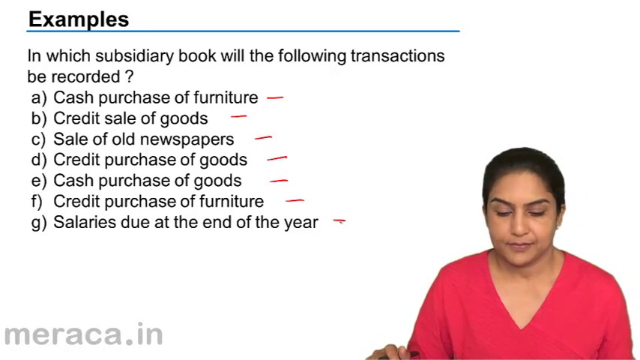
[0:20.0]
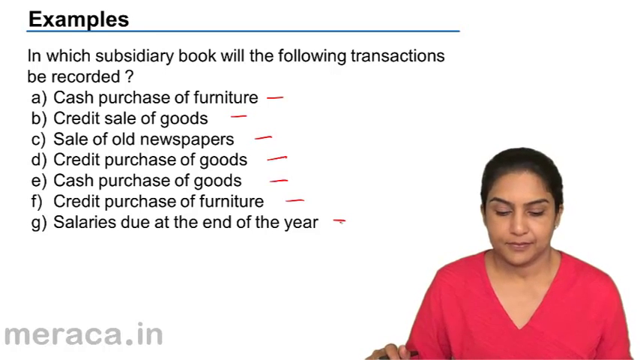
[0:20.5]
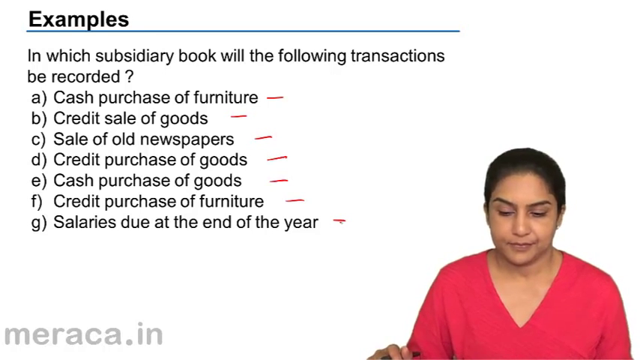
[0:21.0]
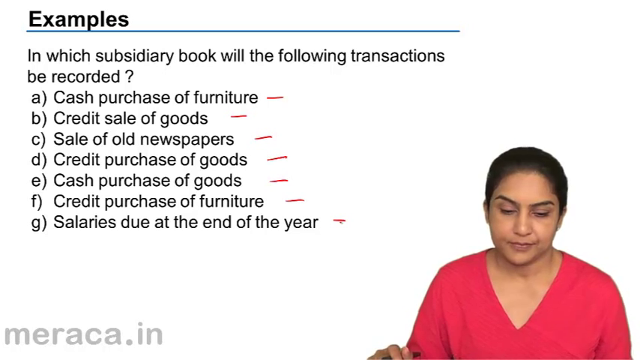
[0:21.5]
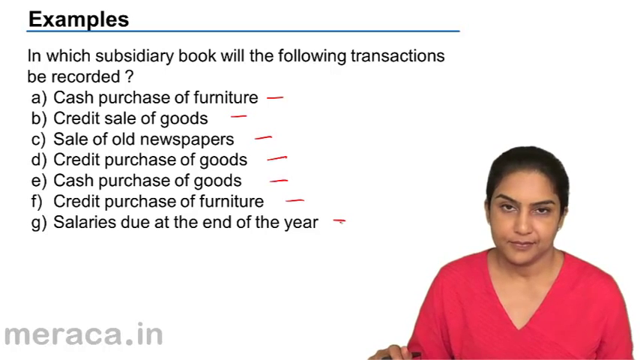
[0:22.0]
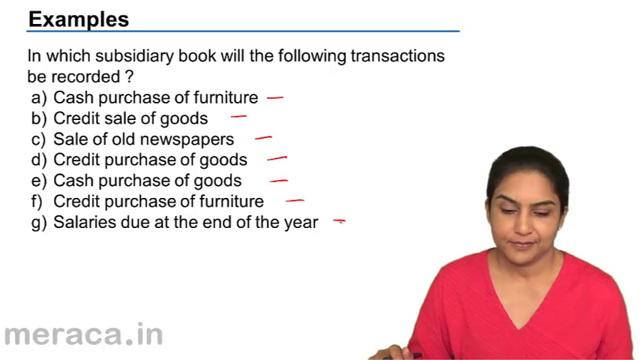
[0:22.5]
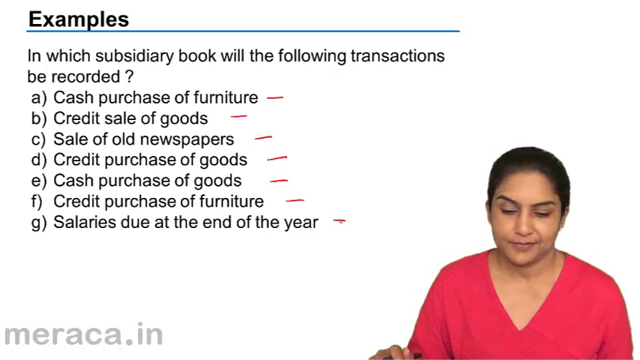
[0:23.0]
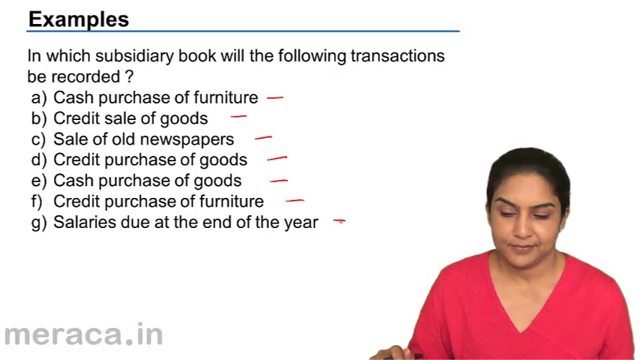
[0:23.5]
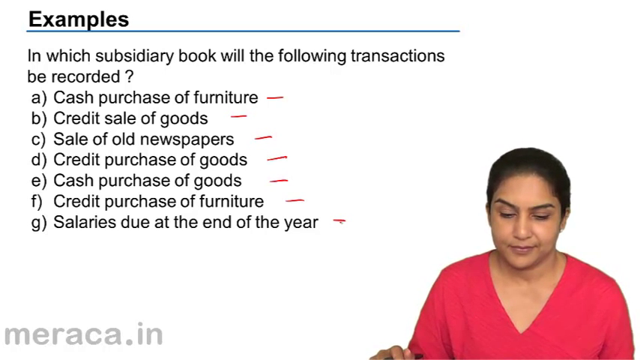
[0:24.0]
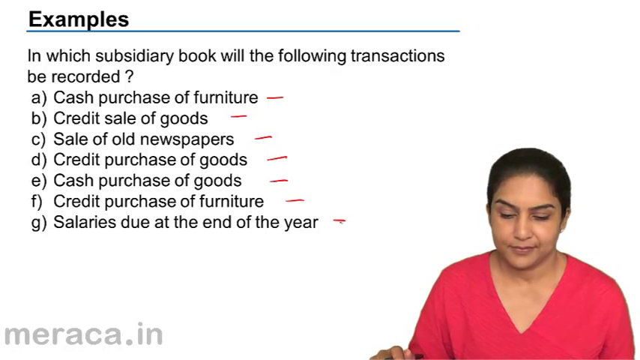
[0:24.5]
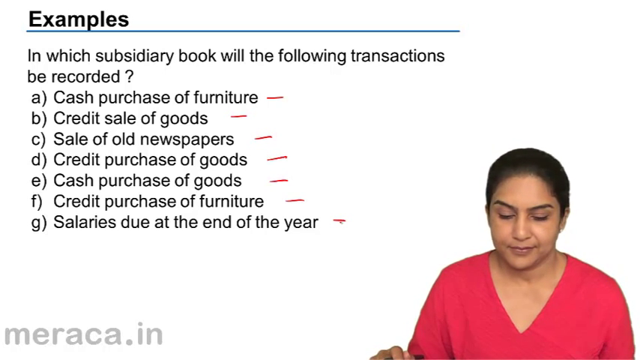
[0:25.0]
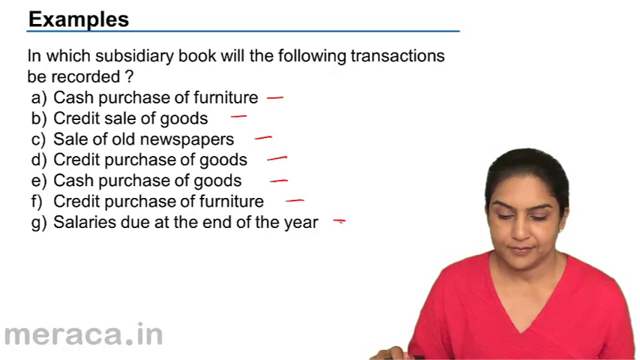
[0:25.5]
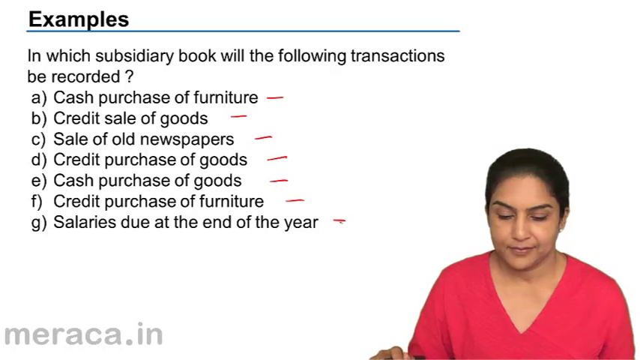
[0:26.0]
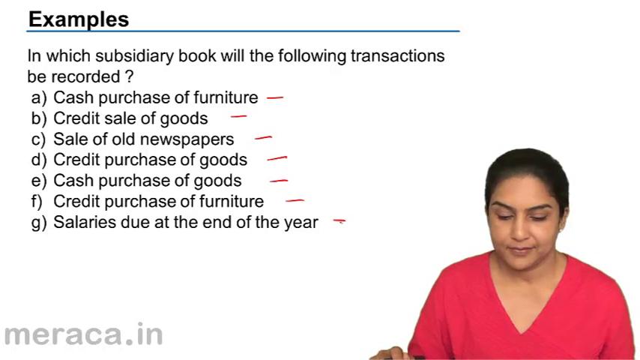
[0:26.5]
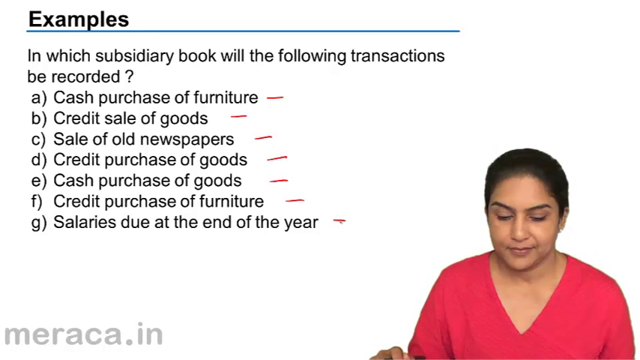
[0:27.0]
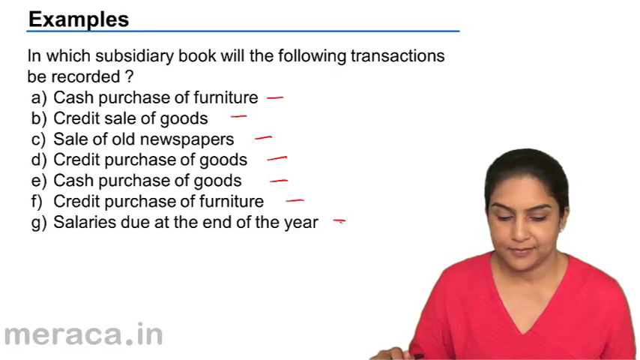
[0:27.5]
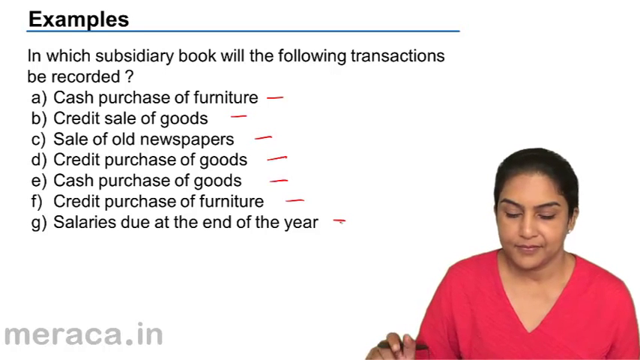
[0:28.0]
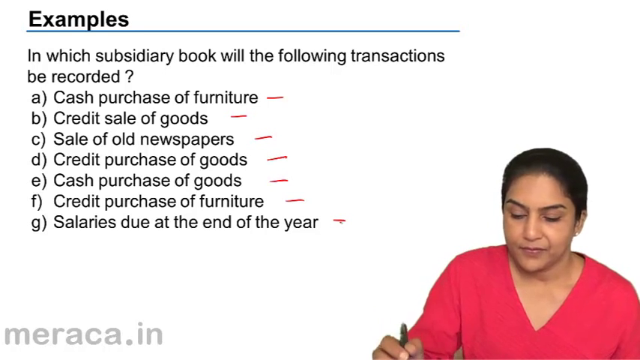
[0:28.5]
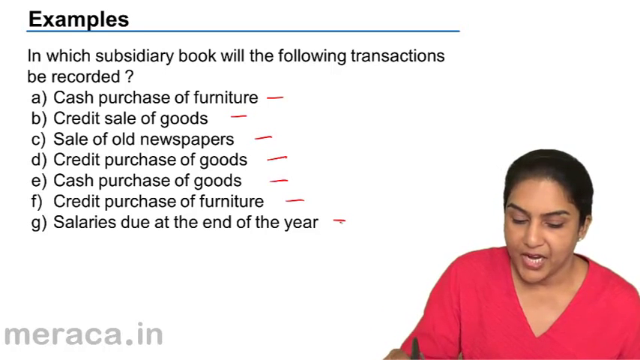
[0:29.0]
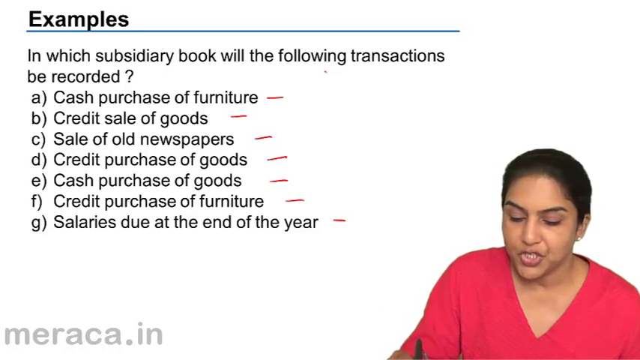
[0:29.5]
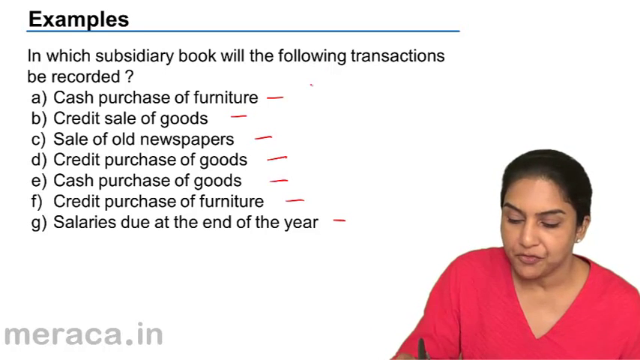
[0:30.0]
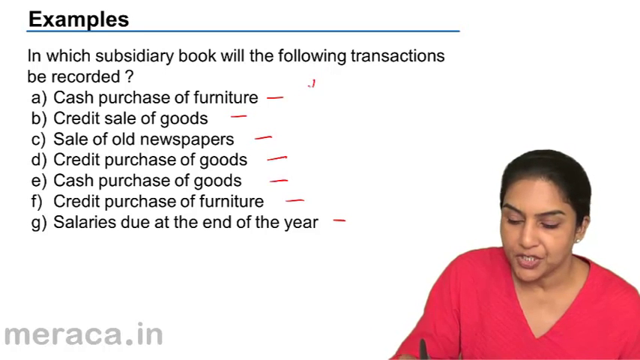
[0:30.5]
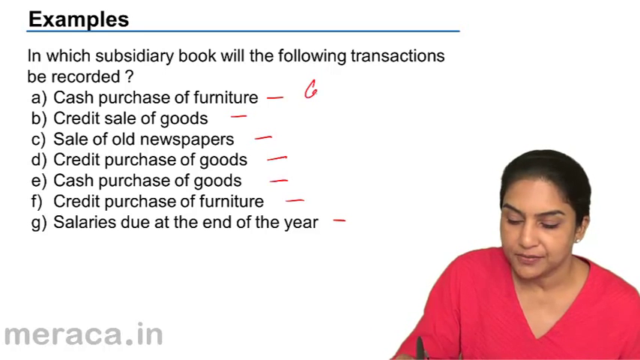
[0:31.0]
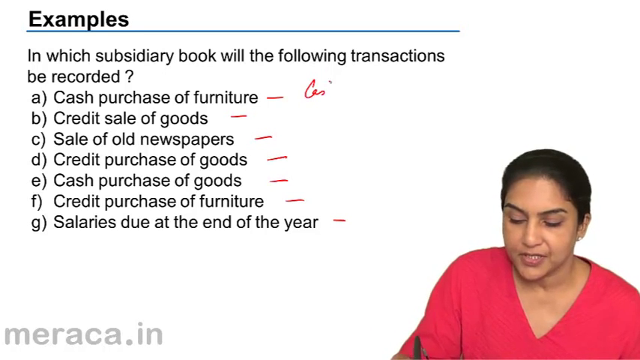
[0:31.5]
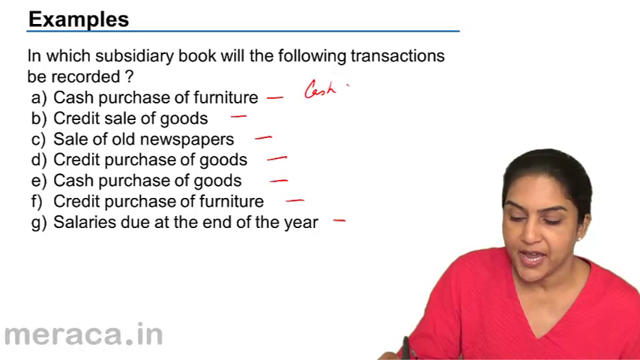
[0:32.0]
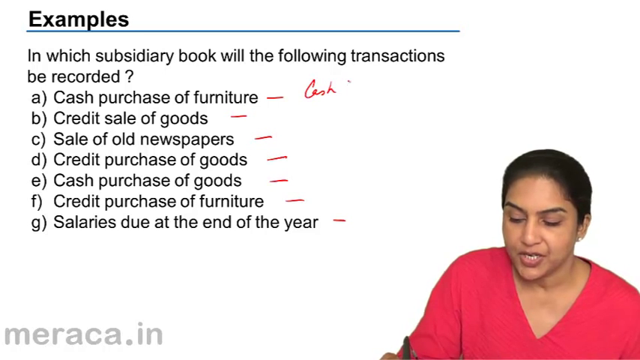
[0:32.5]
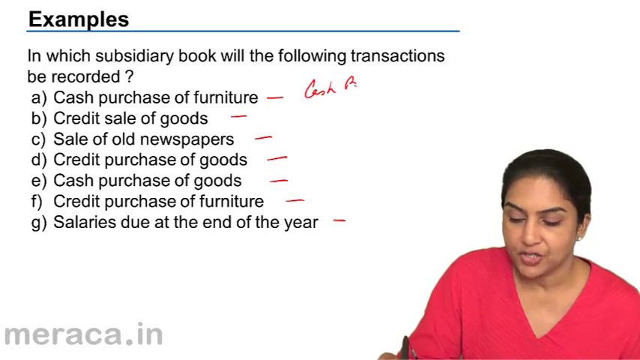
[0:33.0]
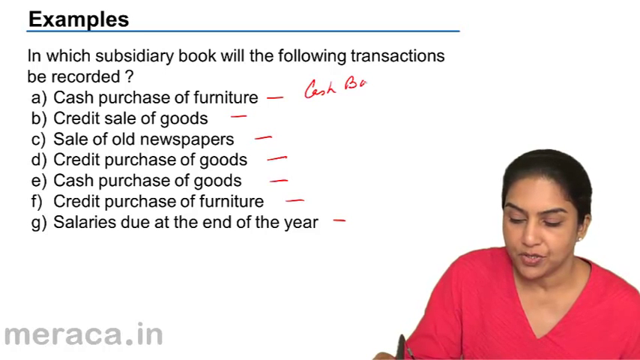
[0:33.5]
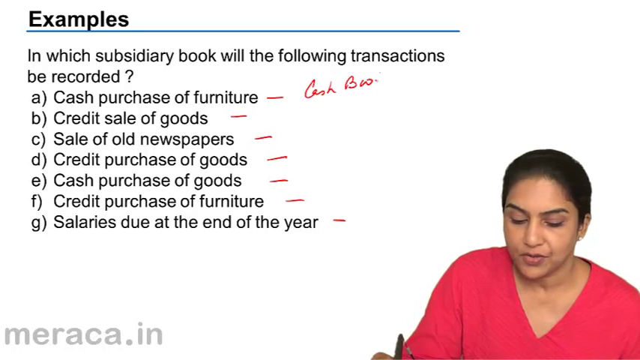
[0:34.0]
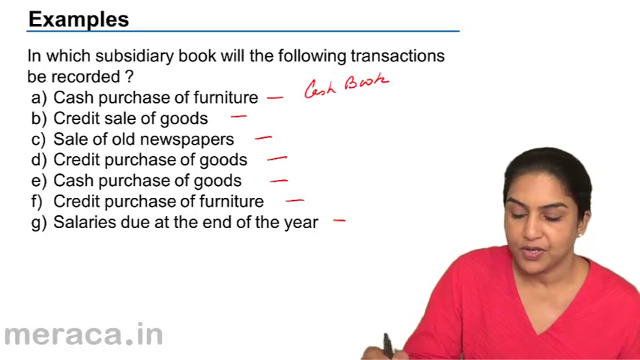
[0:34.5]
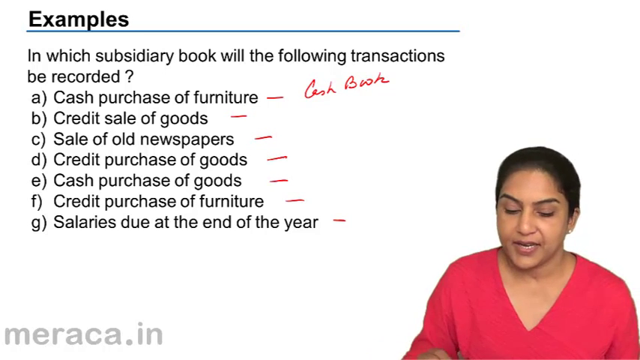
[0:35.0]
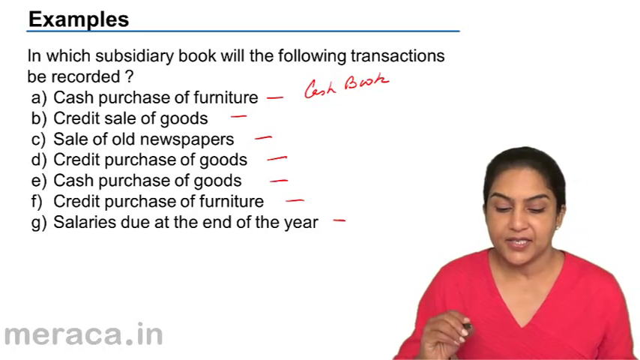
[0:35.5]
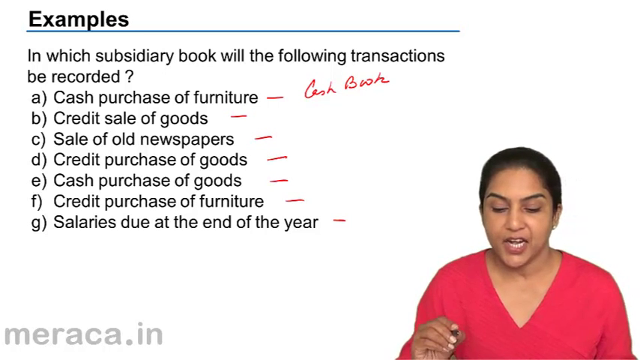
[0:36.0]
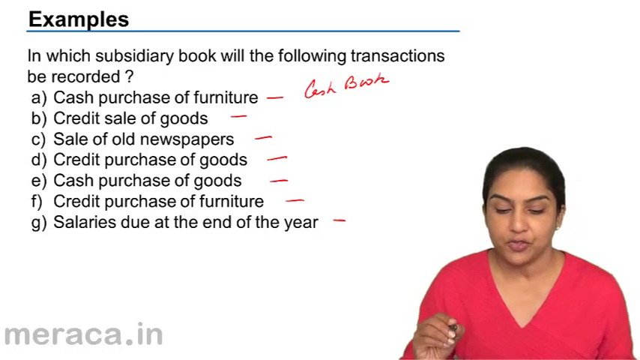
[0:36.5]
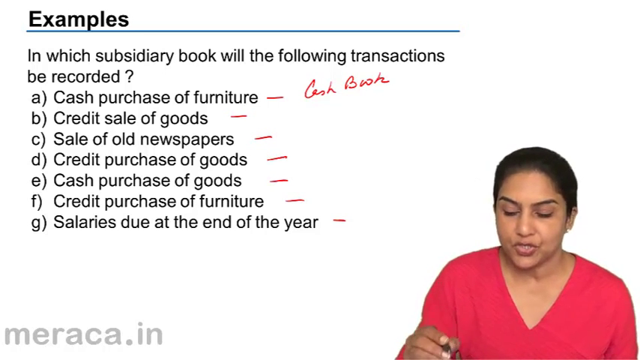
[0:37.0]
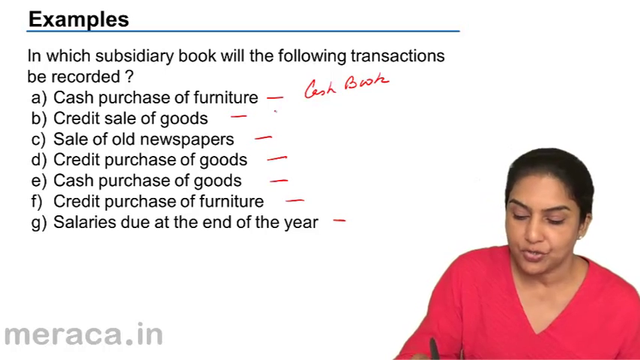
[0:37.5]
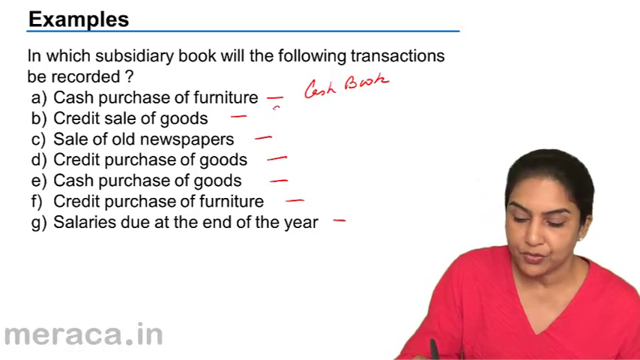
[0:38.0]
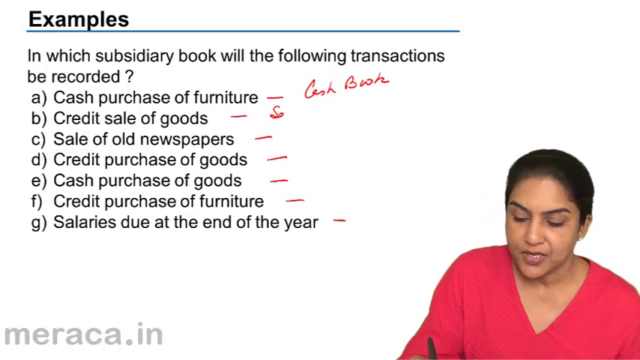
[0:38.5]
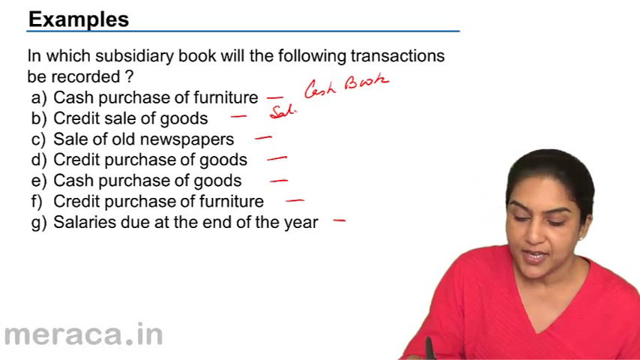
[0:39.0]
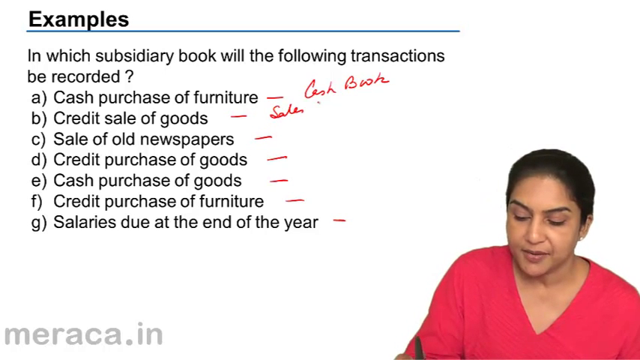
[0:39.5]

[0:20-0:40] The same question remains on the screen. She writes on something in front of her that is like a smart tablet, and her writing shows up on the screen behind her. After option A, cash purchase of furniture, she writes "cash book" in red ink, and for option B, credit sale of goods, she writes "sales". She makes only a little movement, does not move around much, and her expression stays pretty much the same.